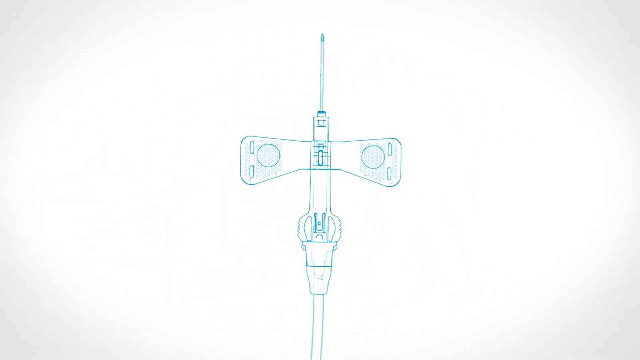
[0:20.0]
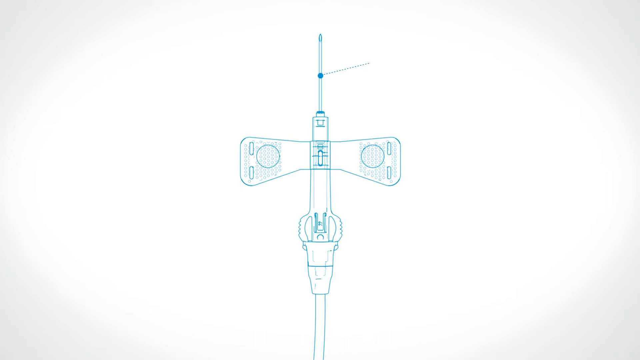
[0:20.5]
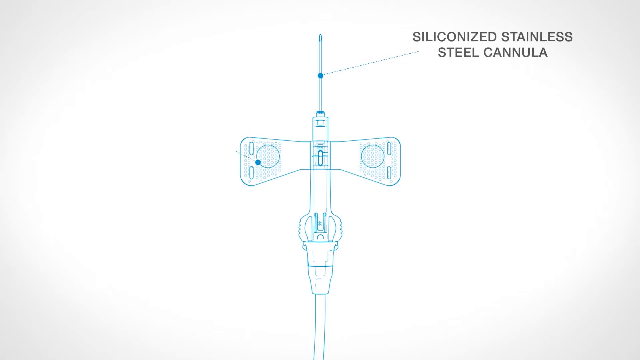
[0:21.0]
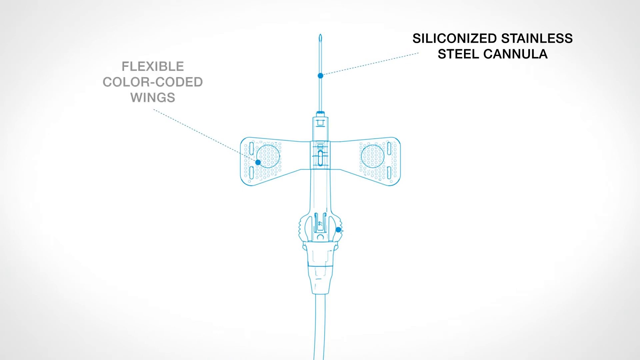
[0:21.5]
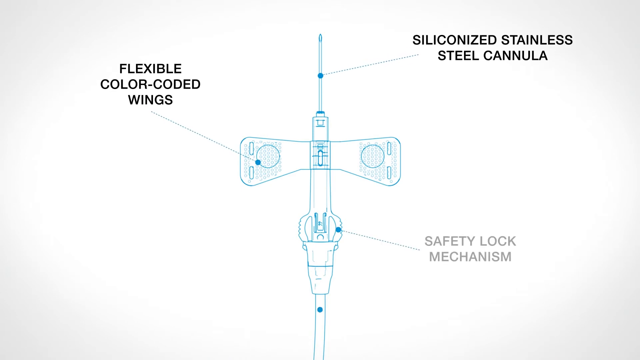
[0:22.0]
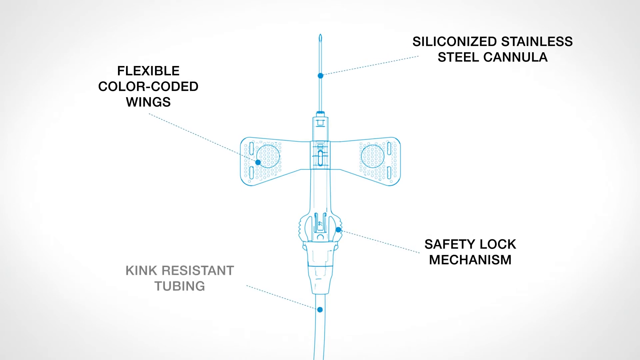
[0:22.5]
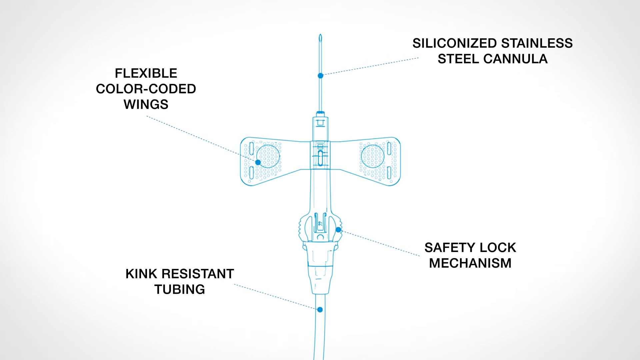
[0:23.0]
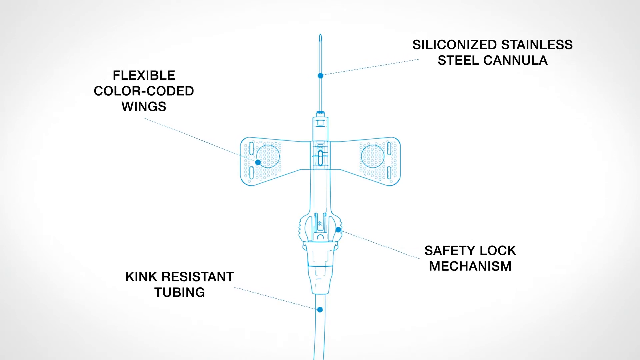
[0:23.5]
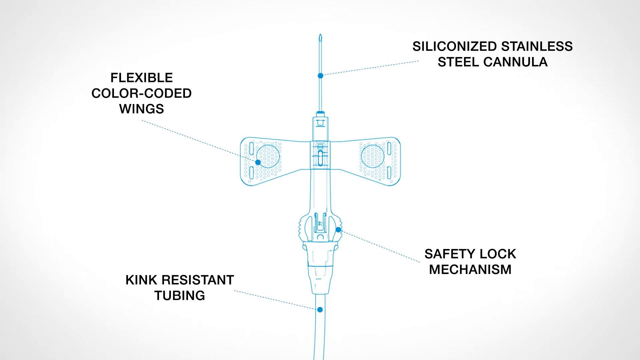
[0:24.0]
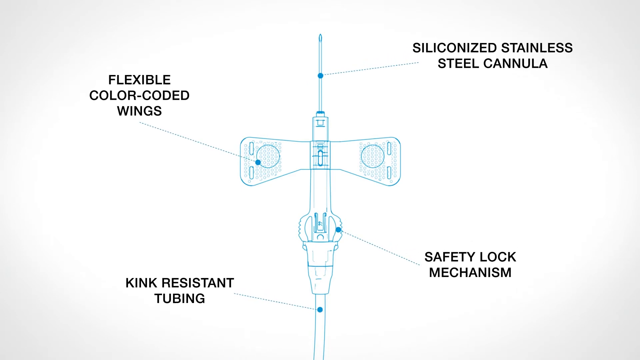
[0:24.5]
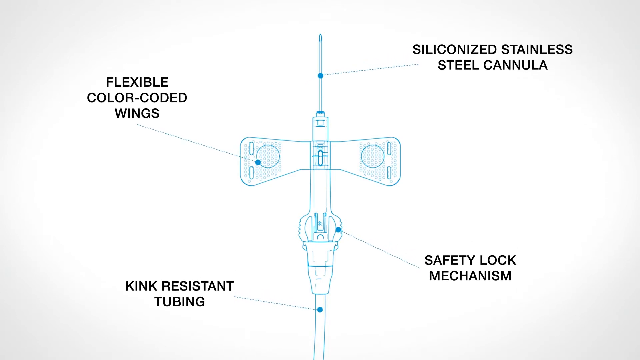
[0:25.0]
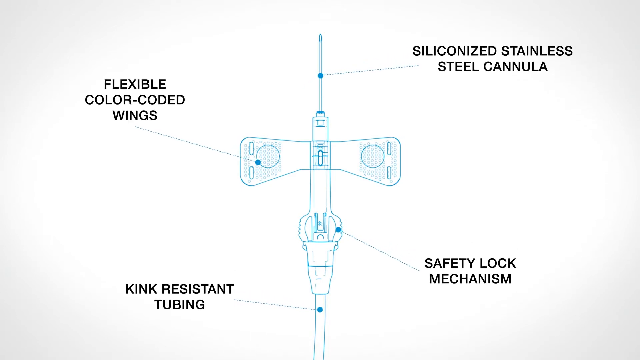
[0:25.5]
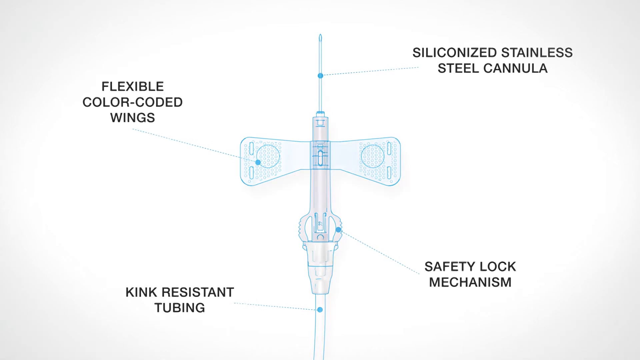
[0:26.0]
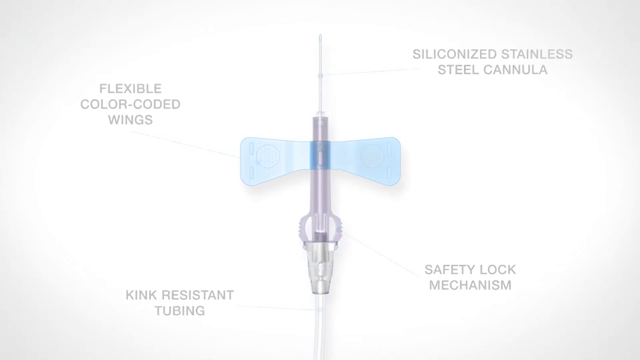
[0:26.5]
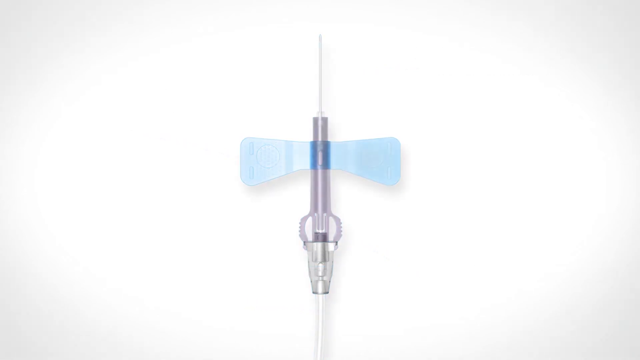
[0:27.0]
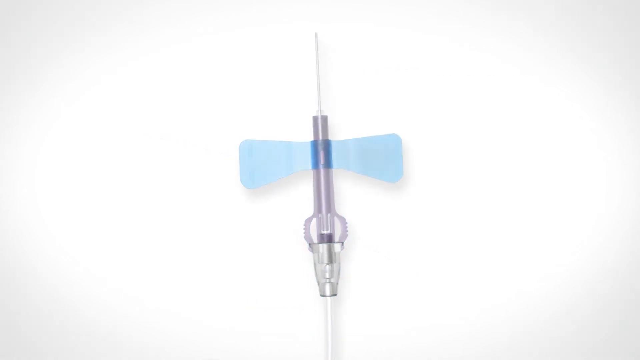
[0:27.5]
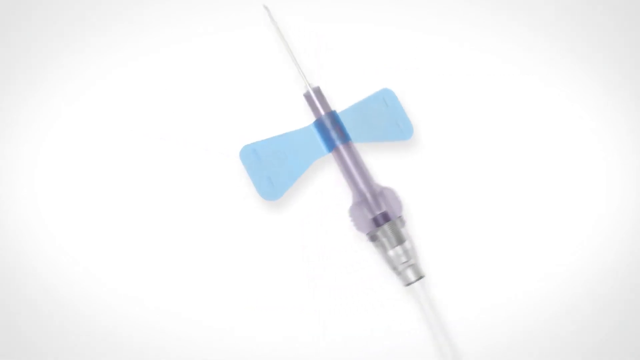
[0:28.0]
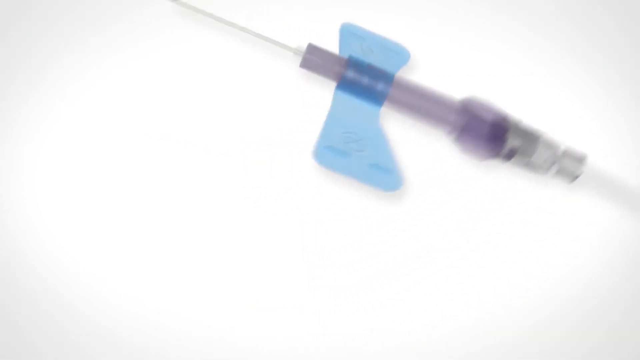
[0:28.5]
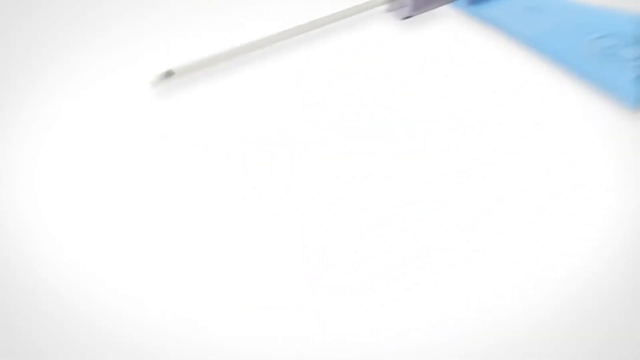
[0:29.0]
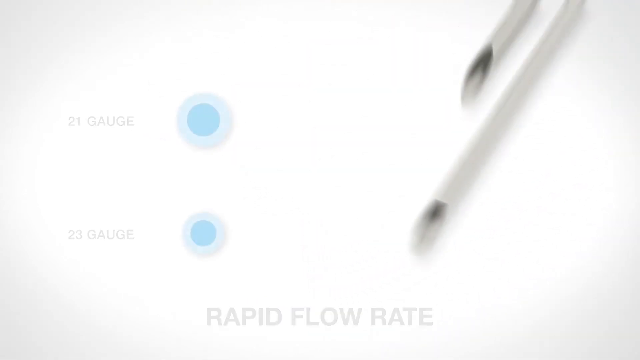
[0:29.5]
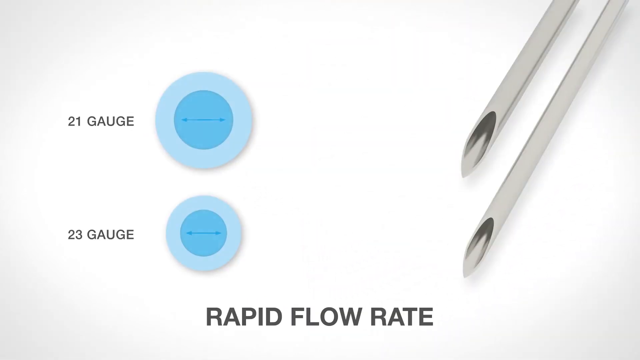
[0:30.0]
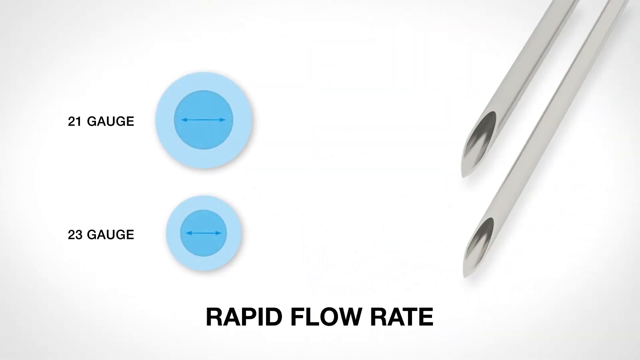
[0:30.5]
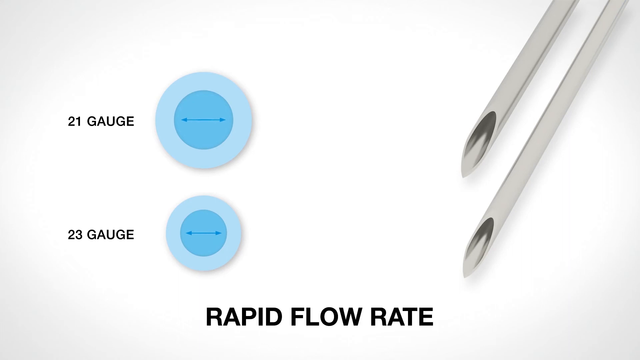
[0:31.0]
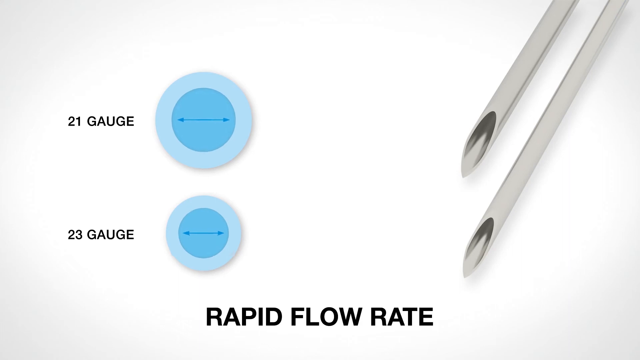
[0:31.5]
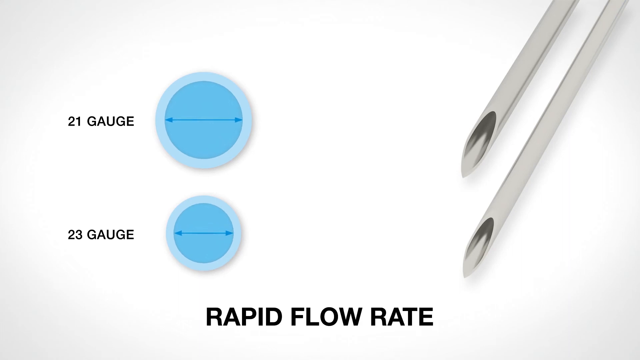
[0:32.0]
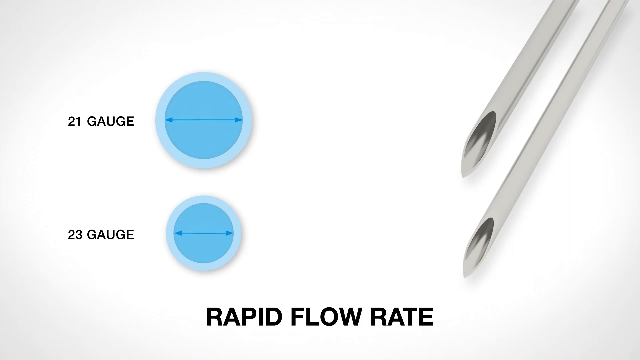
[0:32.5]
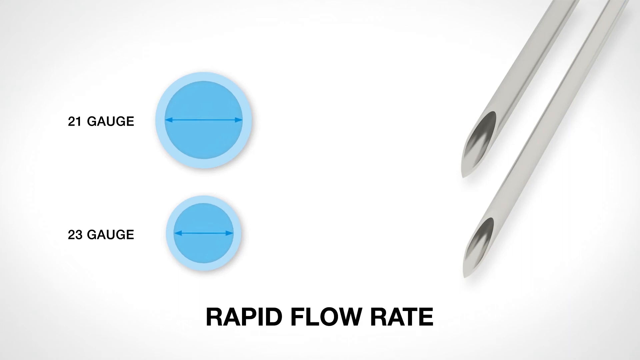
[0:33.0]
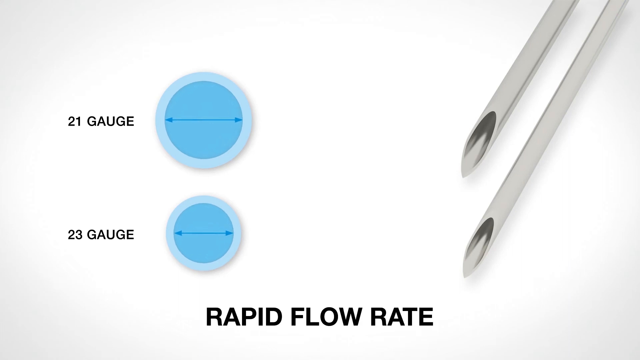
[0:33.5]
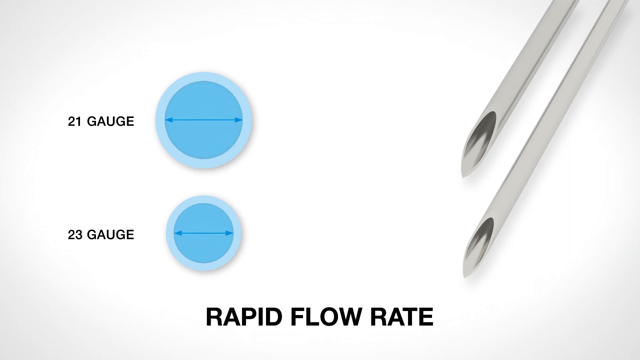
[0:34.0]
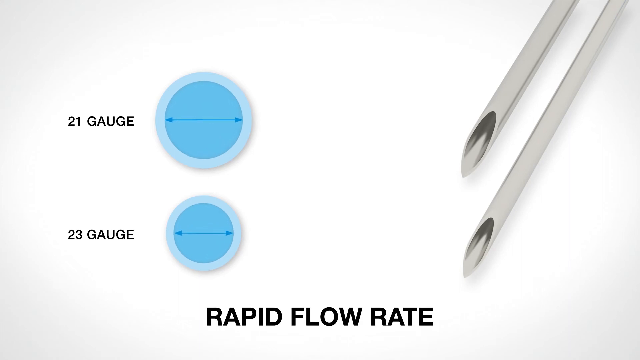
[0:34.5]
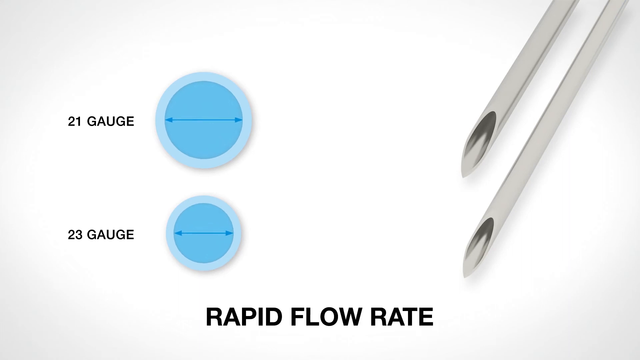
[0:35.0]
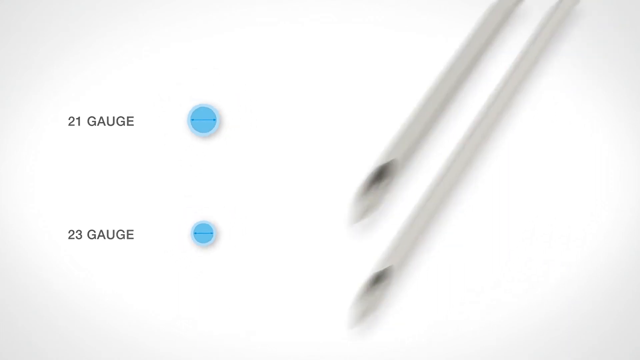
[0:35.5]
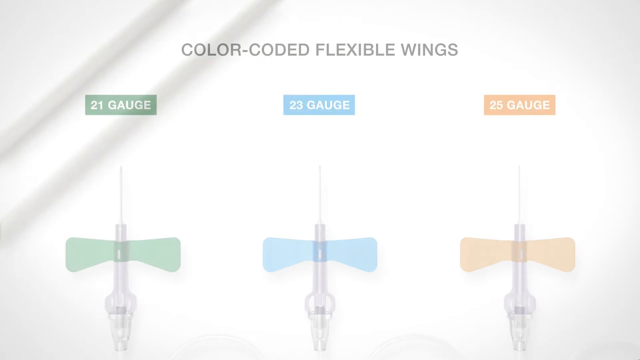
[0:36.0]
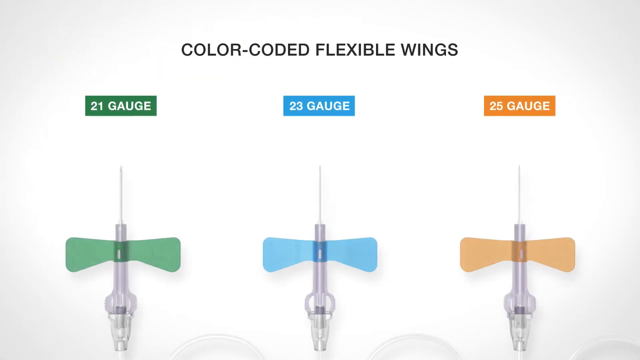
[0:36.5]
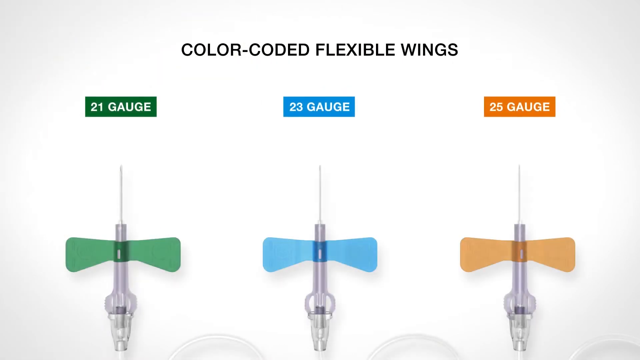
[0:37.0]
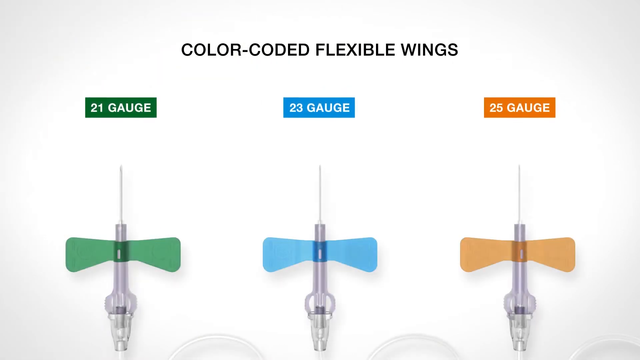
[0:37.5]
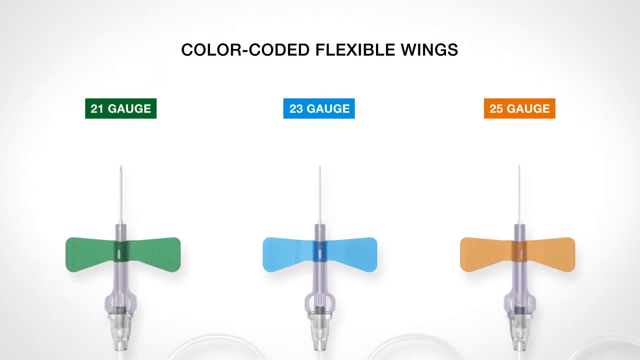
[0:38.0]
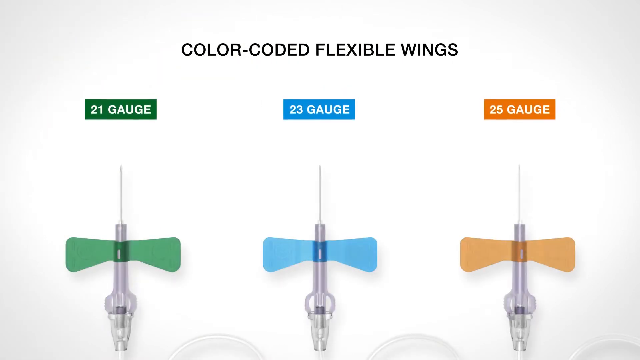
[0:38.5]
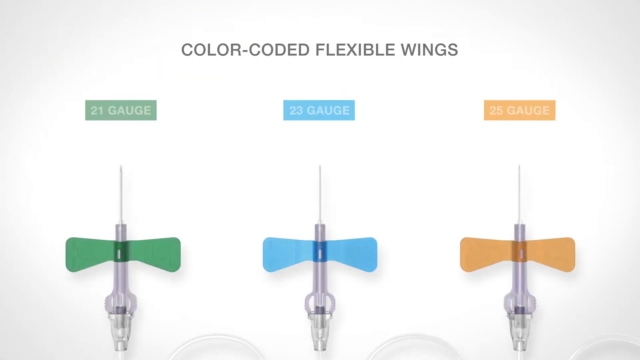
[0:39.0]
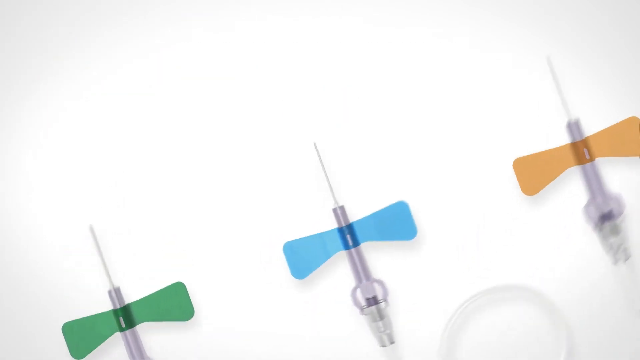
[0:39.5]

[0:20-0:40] The syringe is a long cylindrical object with two blue wings coming out of the sides in the middle. The scene changes to a blueprint of the syringe with various captions pointing to its parts. The needle part has a caption beside it that says "siliconized stainless steel cannula." The wings in the middle are identified as flexible color-coded wings; below them, closer to the base of the syringe, is a safety lock mechanism, and below that is kink-resistant tubing. The scene then shifts to a close-up of the very point of the syringe, the needles, with a caption at the bottom that says "rapid flow rate." To the side are two blue circles showing the two gauges available for the needle, 21 gauge and 23 gauge, with the circles matching the size of each gauge.